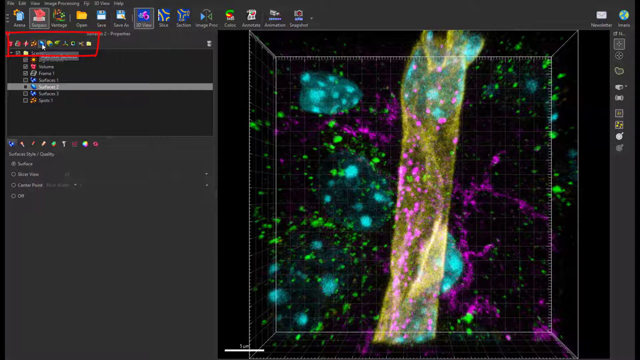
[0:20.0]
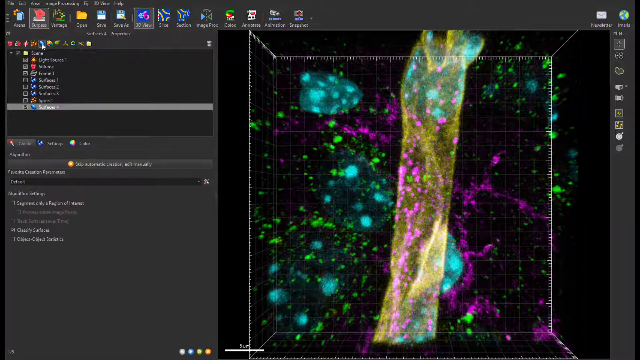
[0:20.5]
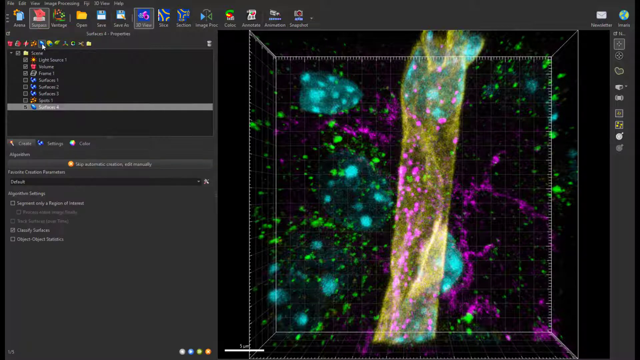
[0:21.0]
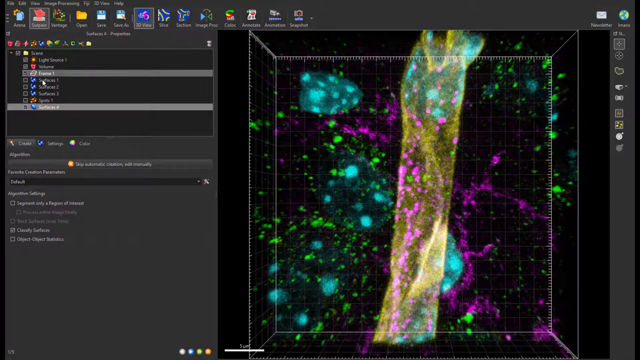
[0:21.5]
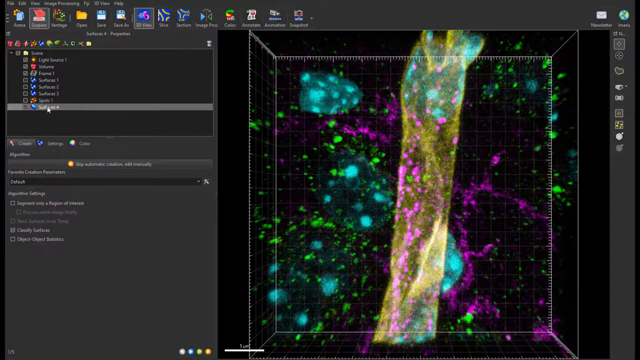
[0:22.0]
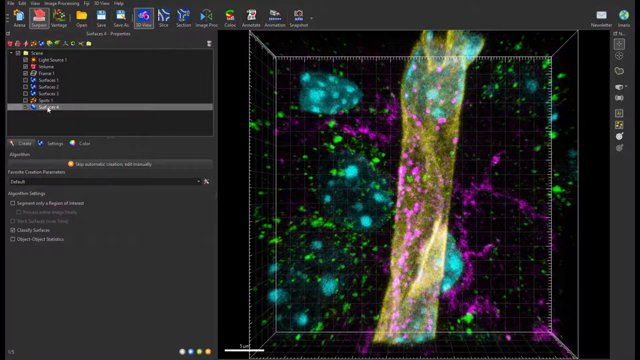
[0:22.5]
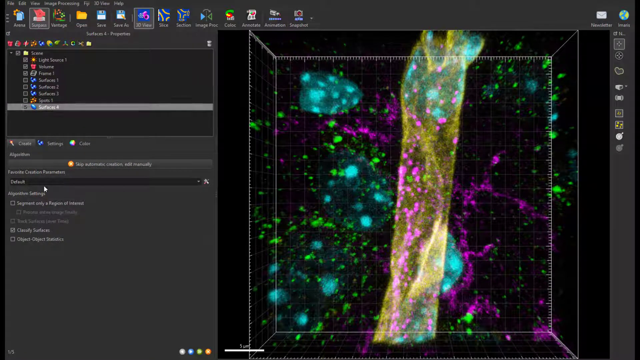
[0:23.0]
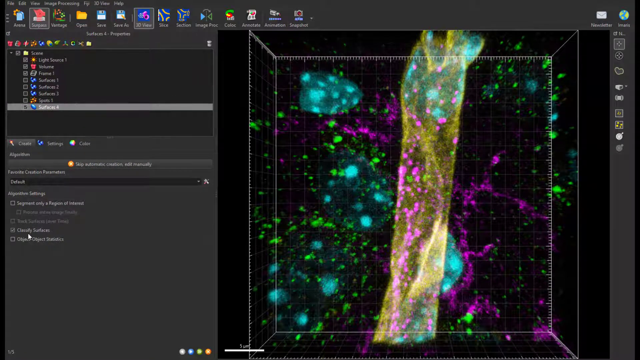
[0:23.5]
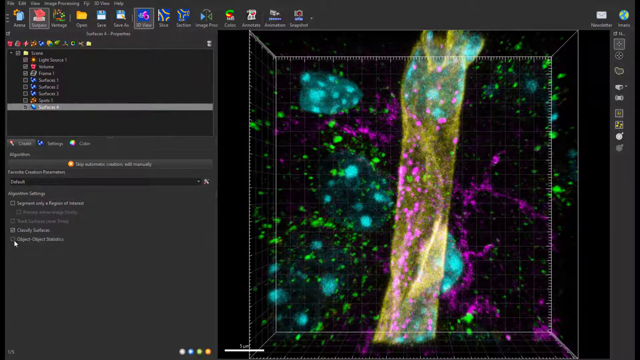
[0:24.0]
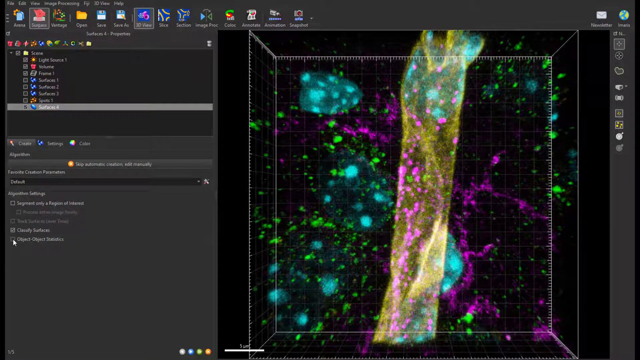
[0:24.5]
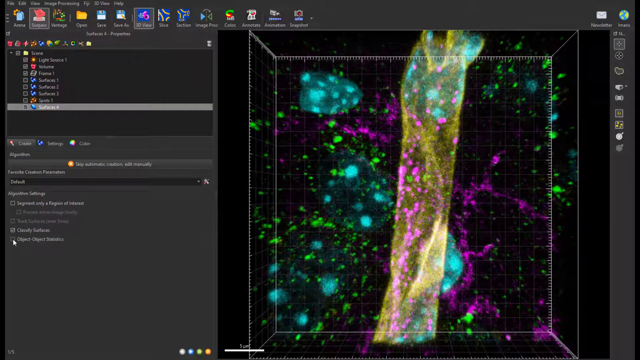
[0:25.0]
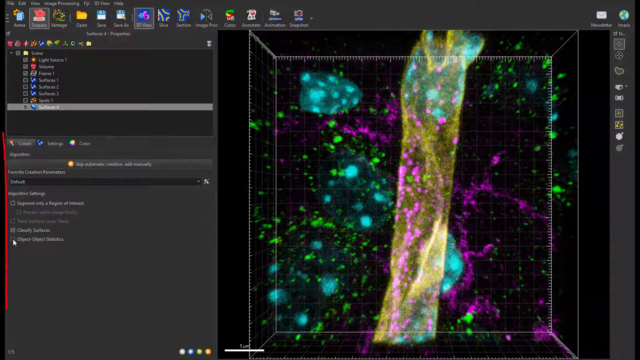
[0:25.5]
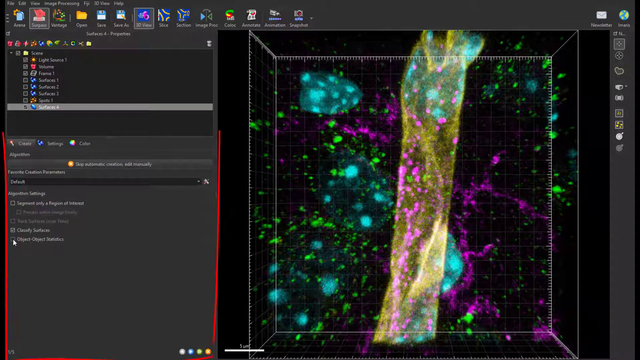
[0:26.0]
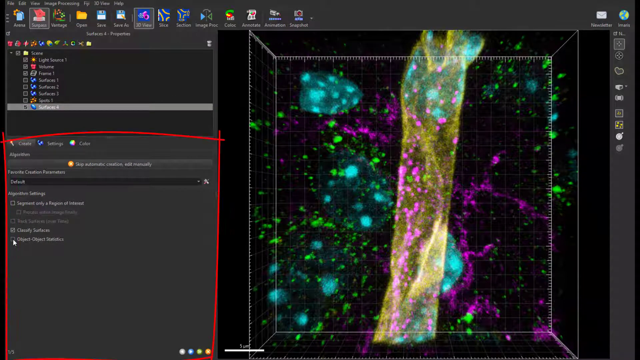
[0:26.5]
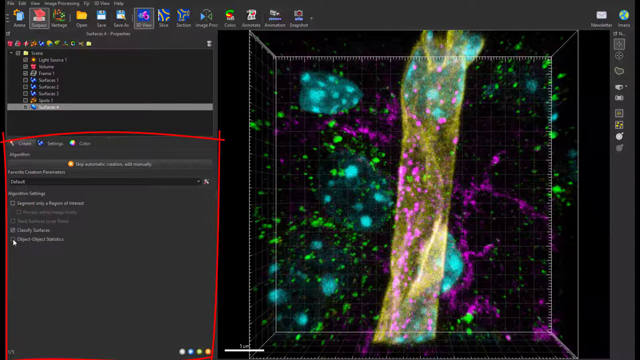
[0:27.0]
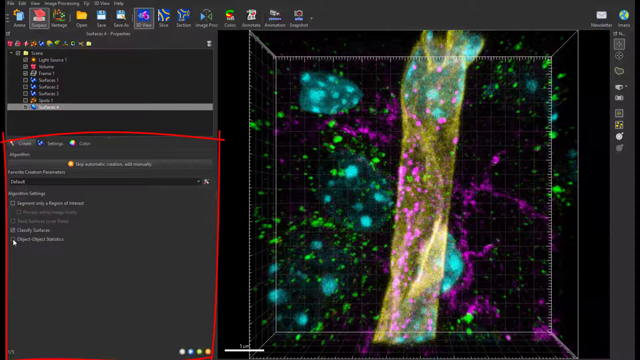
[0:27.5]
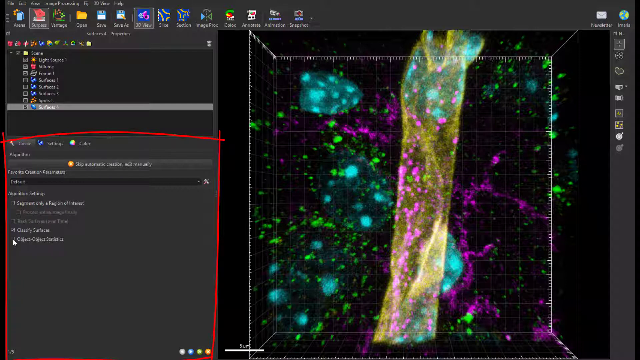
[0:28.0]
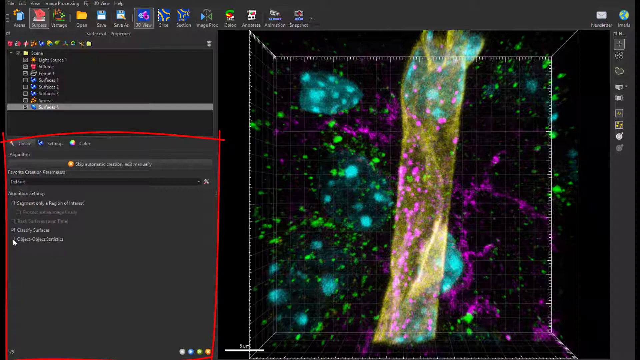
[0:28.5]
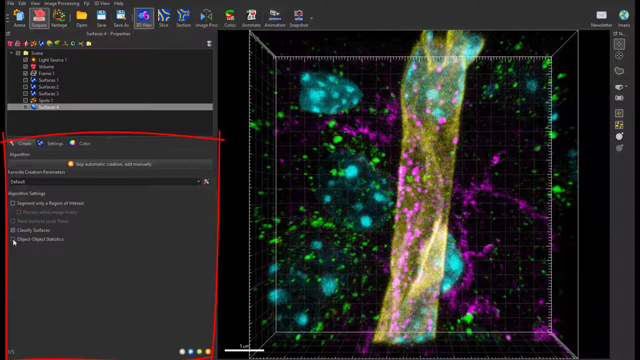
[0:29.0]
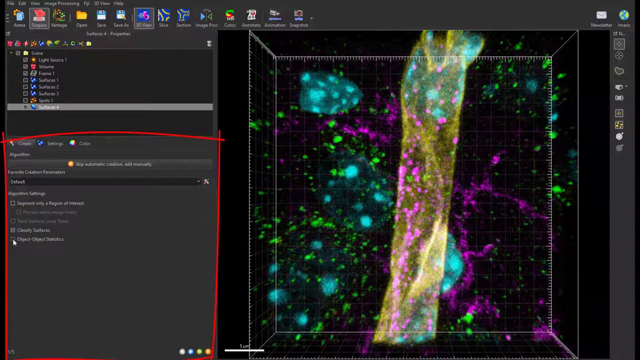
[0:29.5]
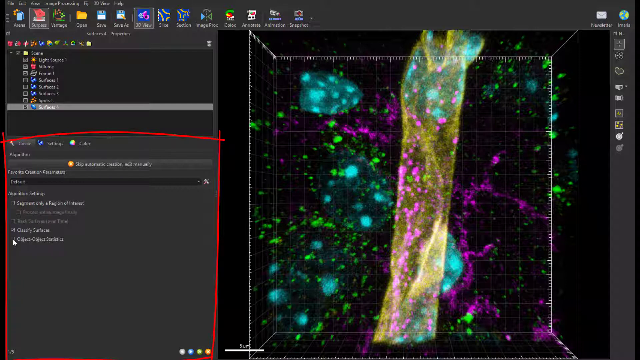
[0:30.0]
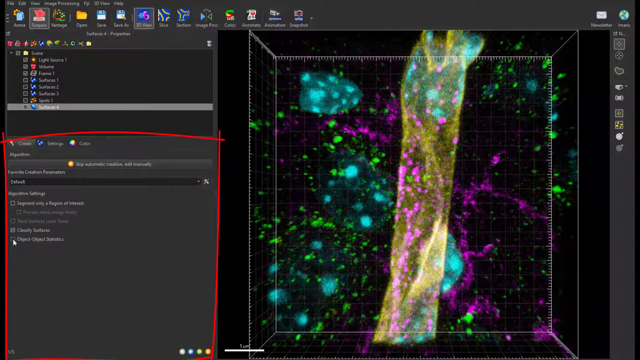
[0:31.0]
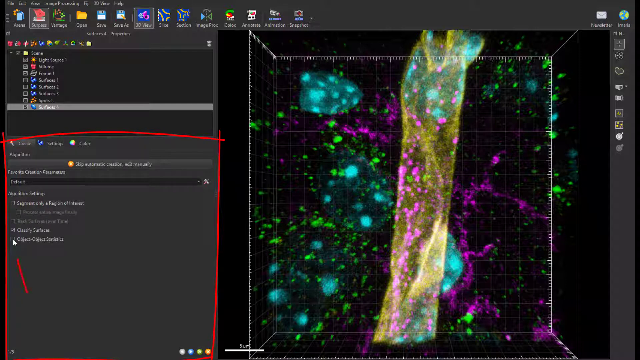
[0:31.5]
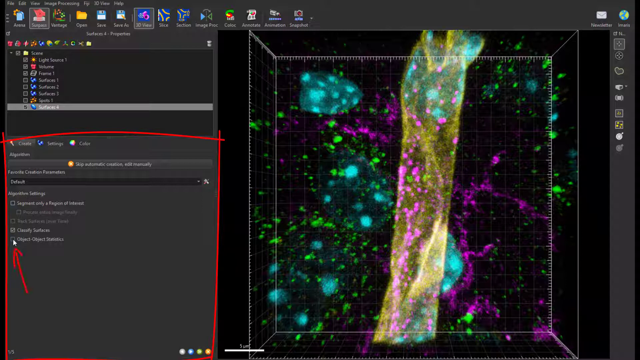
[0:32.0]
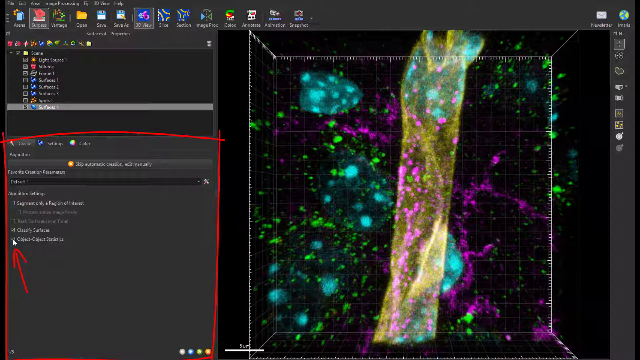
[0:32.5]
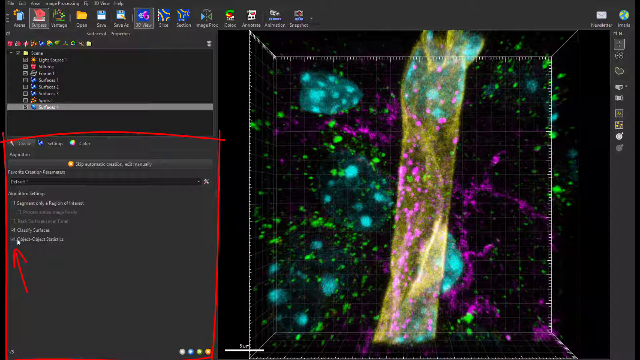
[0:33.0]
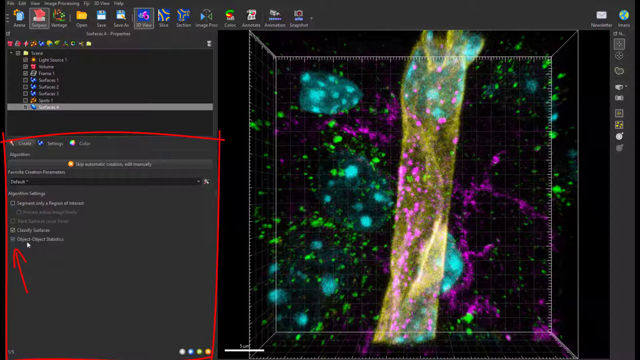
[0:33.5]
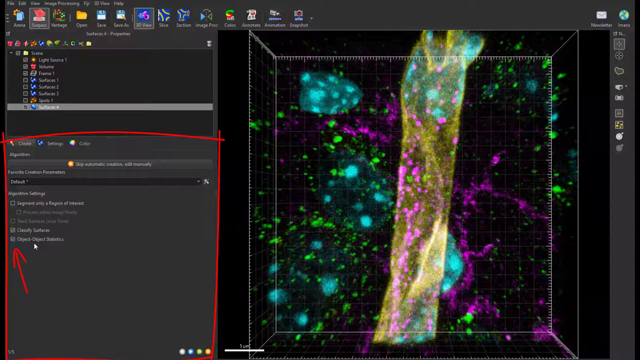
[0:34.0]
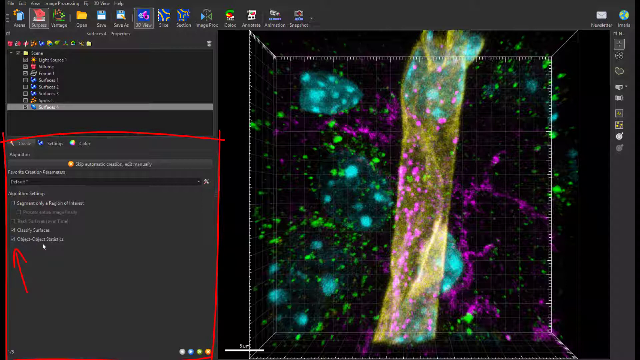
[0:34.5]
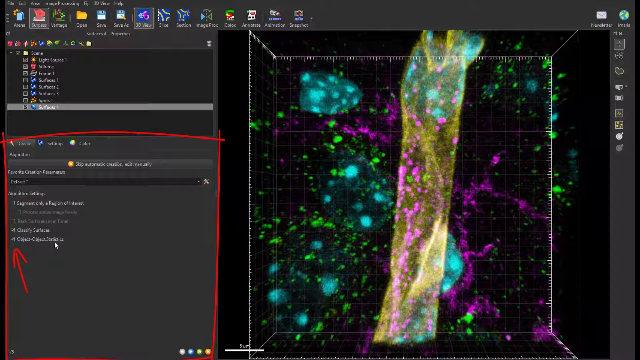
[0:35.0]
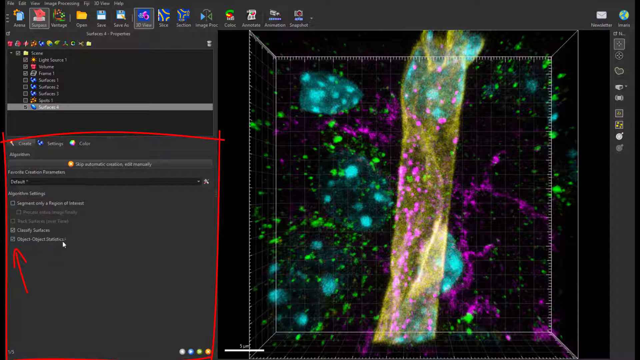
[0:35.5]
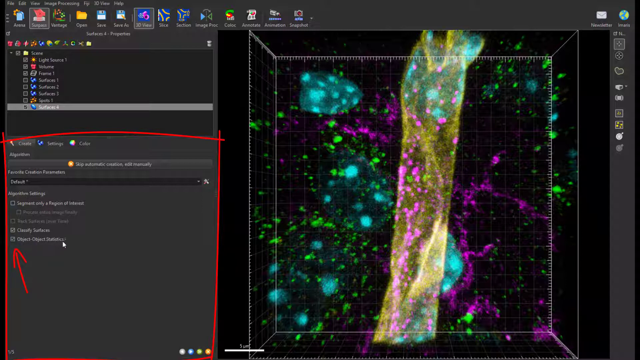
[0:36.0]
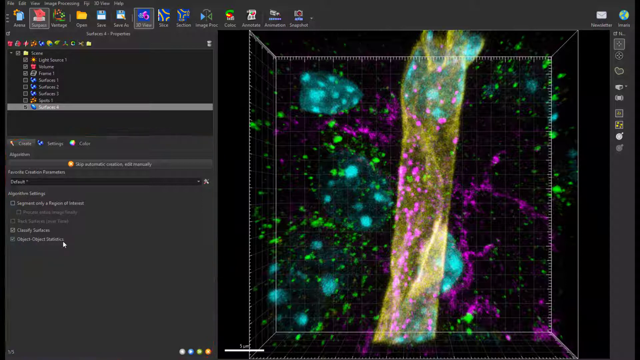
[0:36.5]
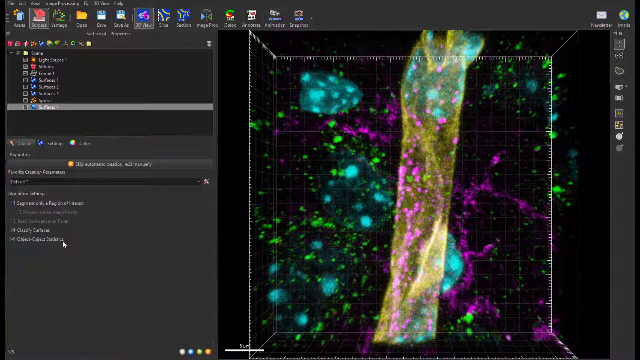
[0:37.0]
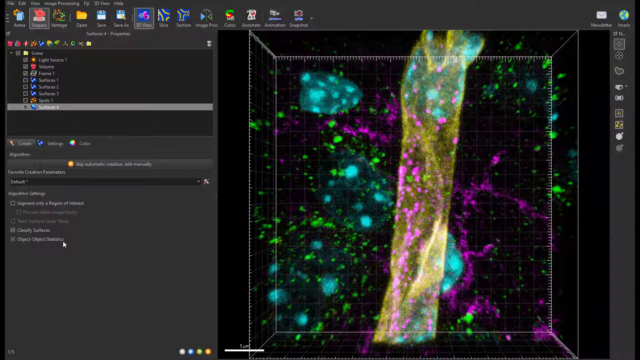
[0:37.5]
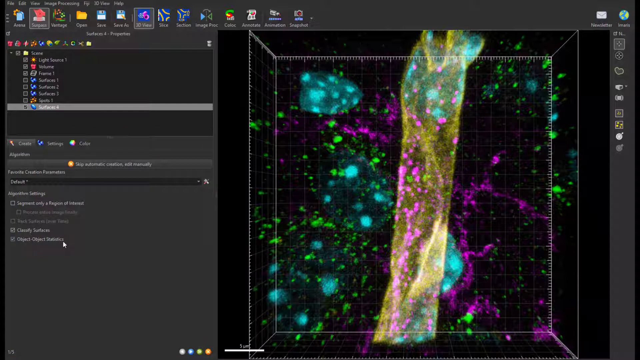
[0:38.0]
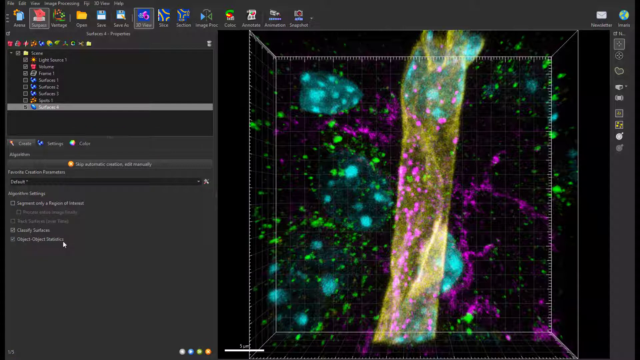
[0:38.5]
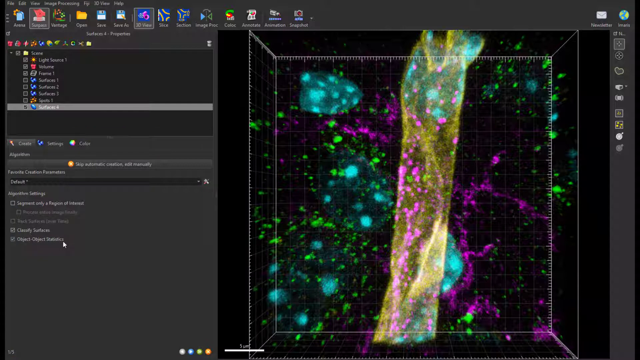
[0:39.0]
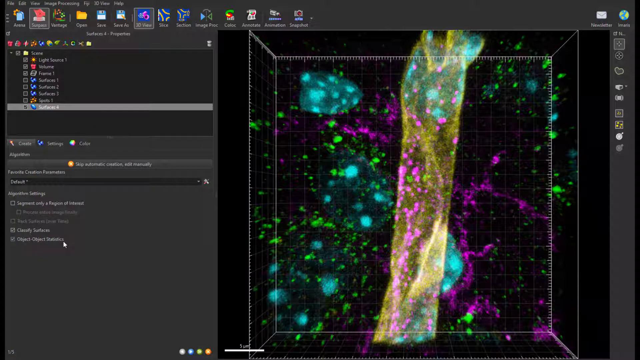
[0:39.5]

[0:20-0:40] A number of different balls pop up, and text at the bottom reads "shortest distance, overlapped value - what to remember and where to find the measurements." The balls run from left to right in red, different shades of orange, different shades of yellow, green, different shades of blue, and then back to different shades of green and yellow. The scene then appears to be on some type of computer screen and looks different, possibly zoomed in. In the next part, the long stick-like middle part is still there, but the image looks like splattered paint in teal, turquoise, green and a magenta color, with no orange or red visible.